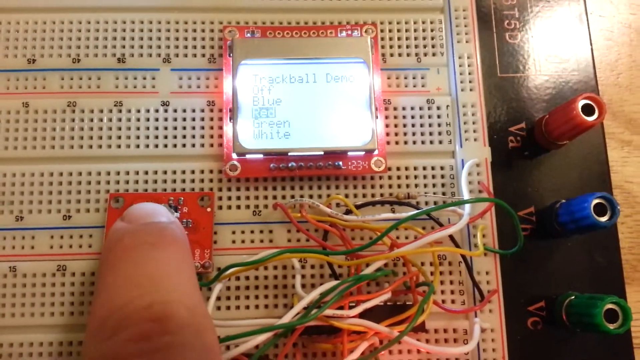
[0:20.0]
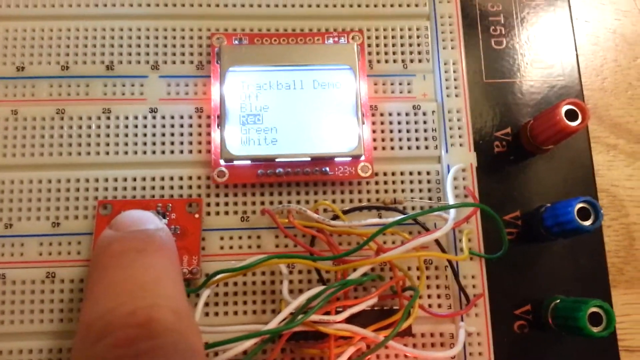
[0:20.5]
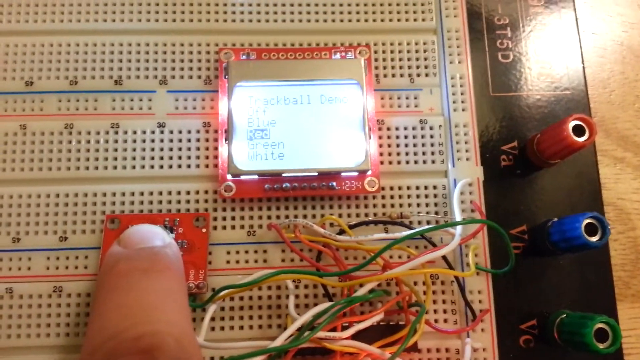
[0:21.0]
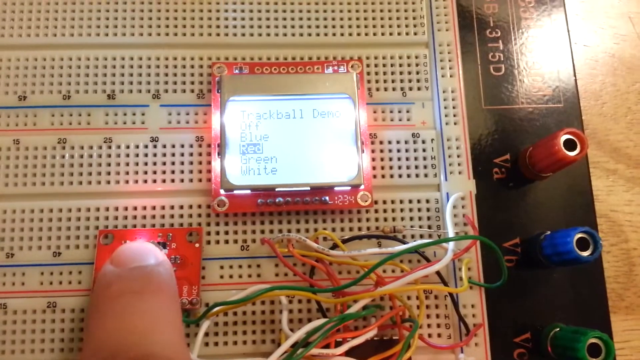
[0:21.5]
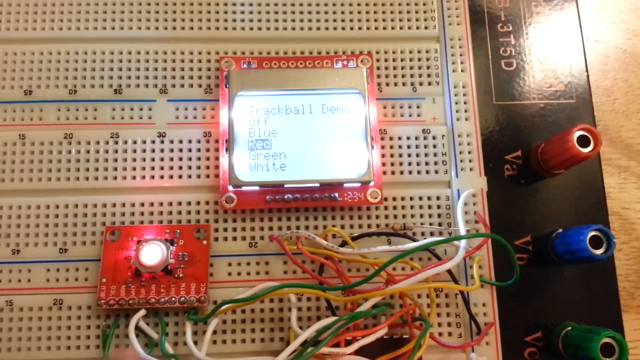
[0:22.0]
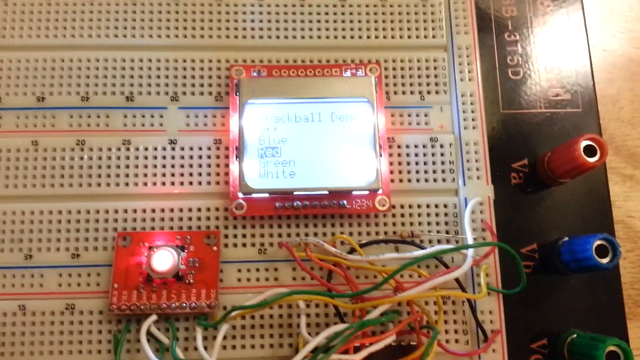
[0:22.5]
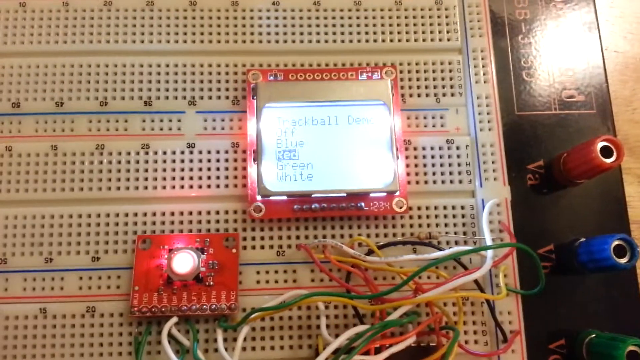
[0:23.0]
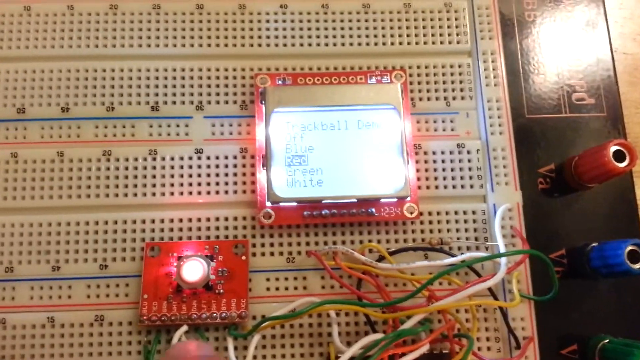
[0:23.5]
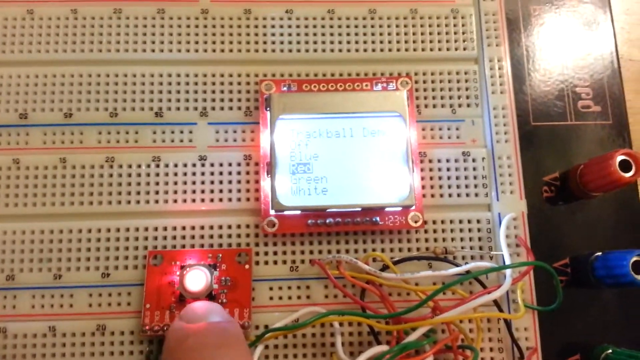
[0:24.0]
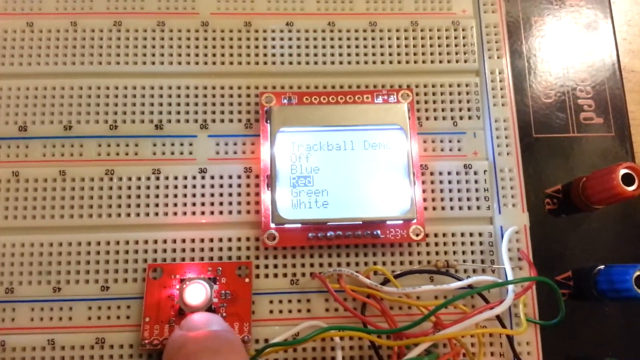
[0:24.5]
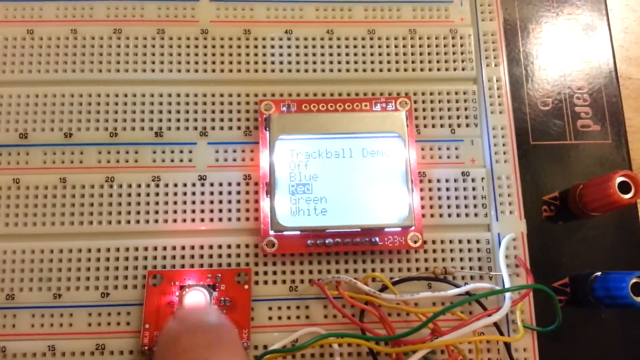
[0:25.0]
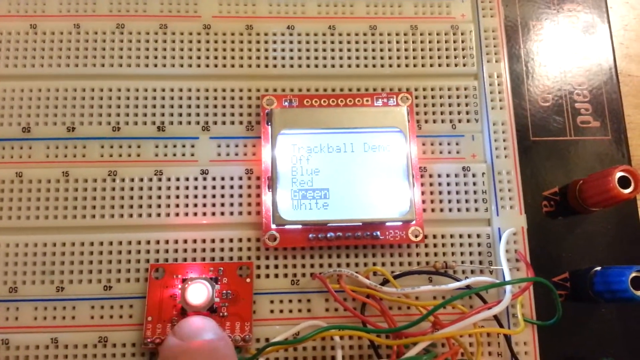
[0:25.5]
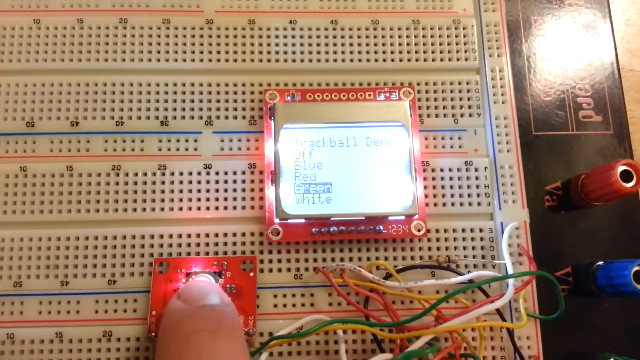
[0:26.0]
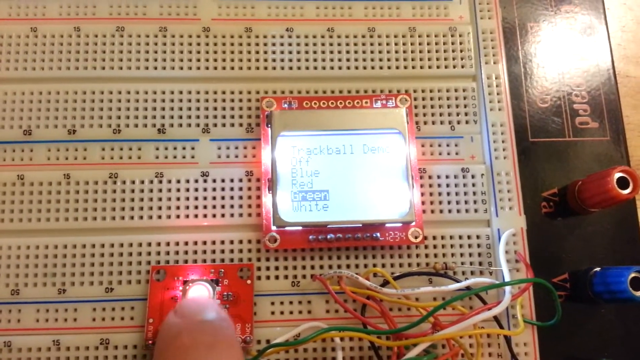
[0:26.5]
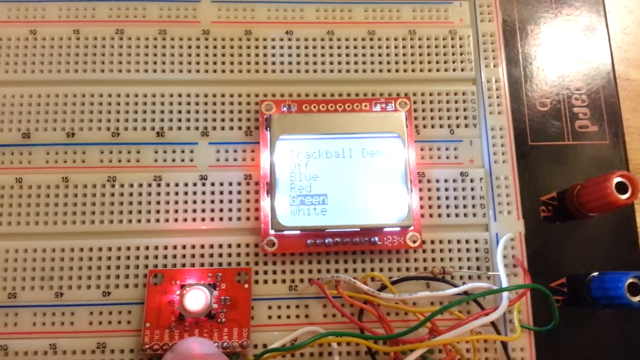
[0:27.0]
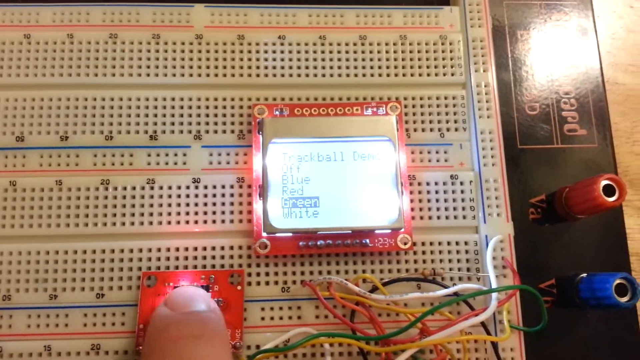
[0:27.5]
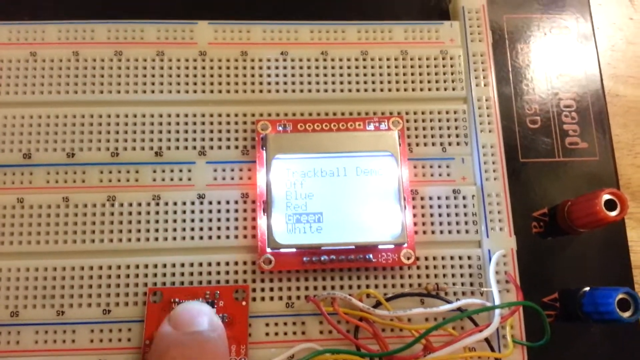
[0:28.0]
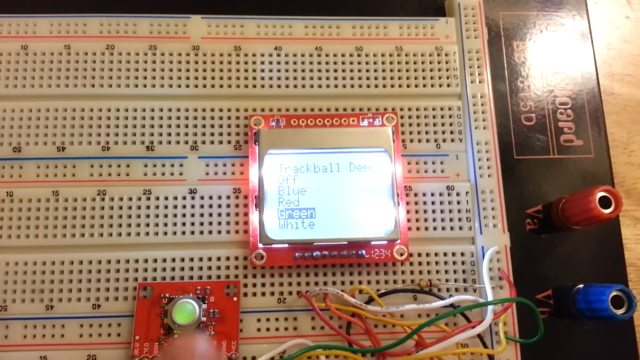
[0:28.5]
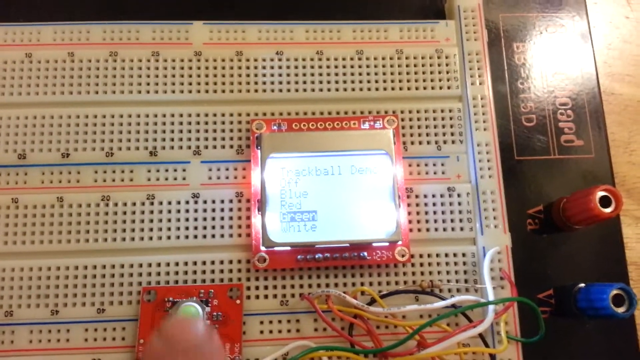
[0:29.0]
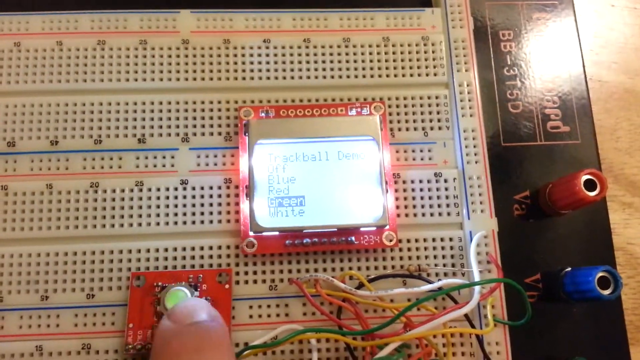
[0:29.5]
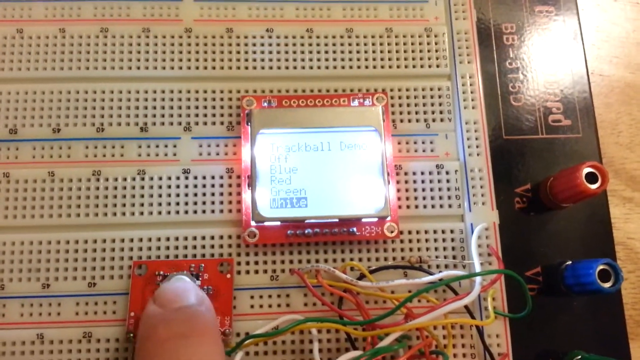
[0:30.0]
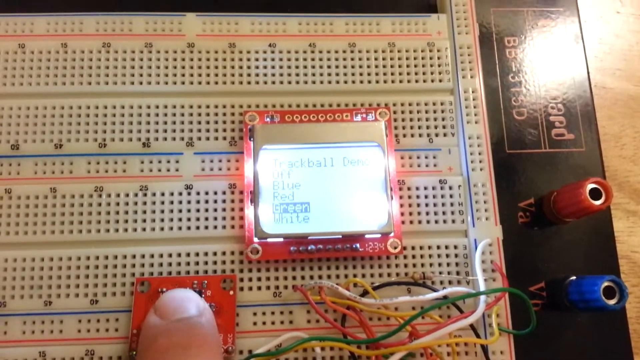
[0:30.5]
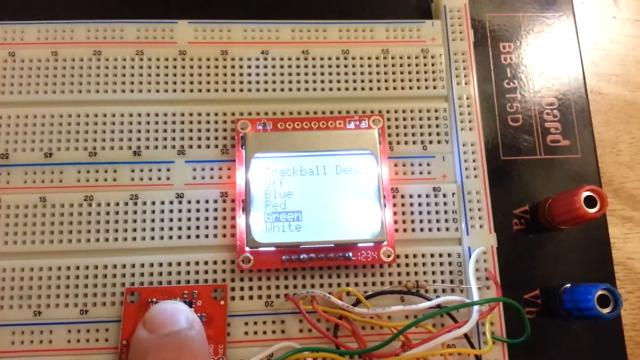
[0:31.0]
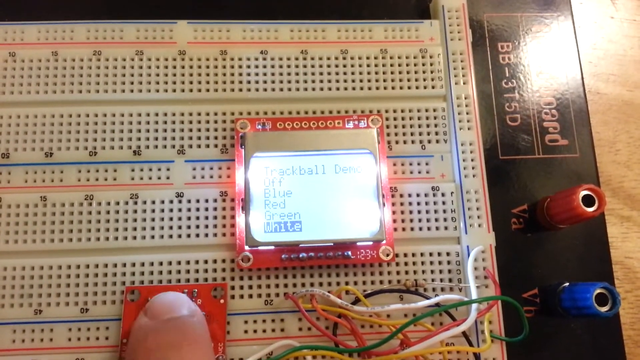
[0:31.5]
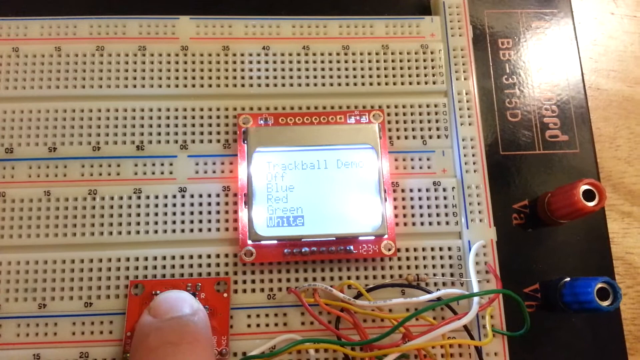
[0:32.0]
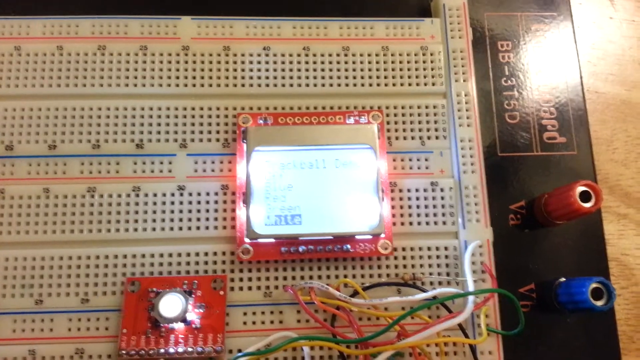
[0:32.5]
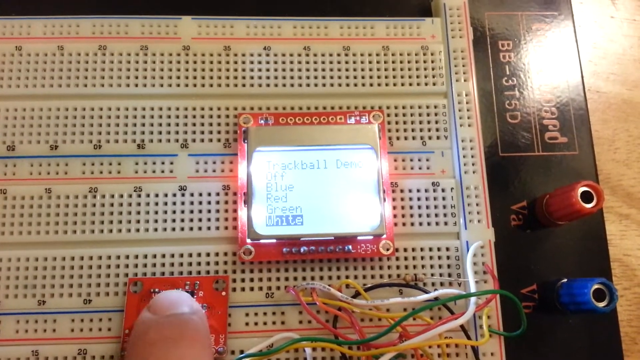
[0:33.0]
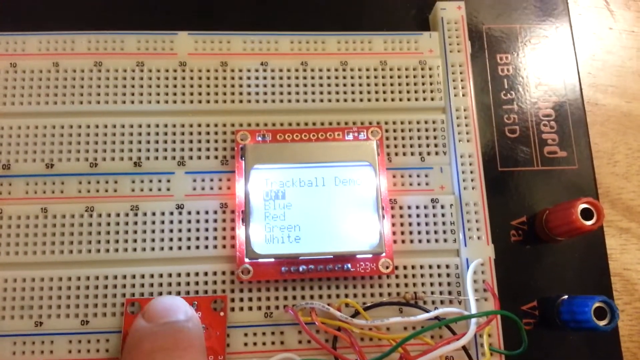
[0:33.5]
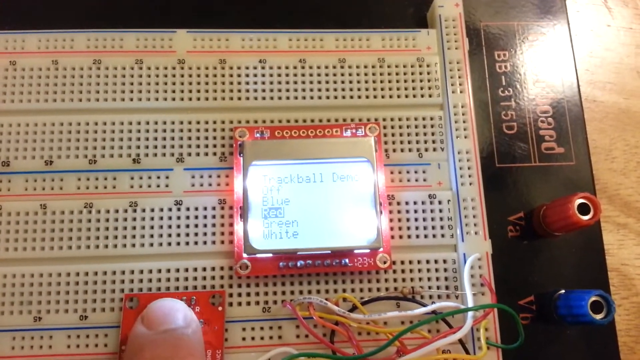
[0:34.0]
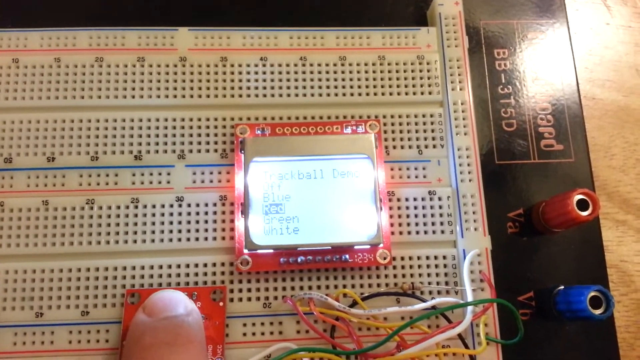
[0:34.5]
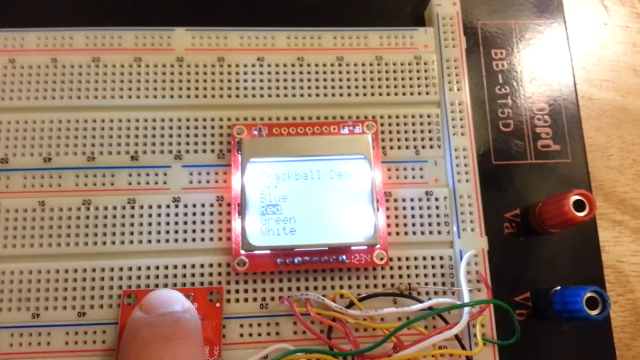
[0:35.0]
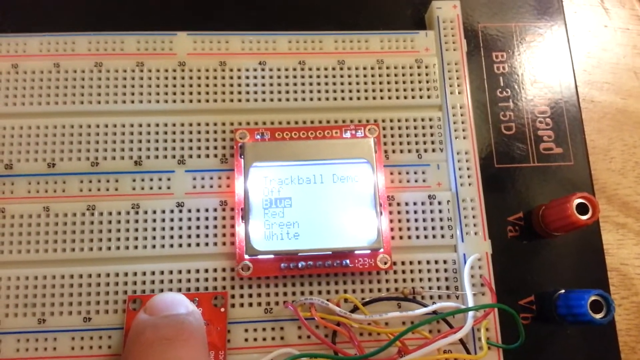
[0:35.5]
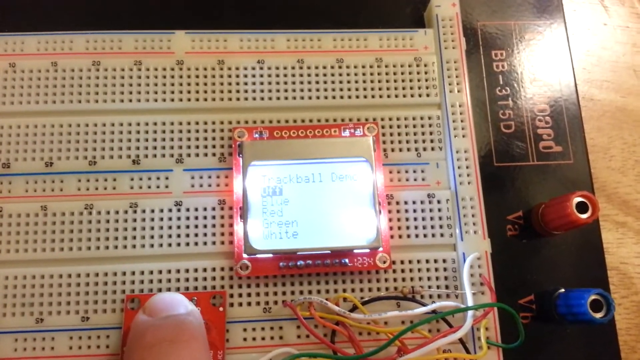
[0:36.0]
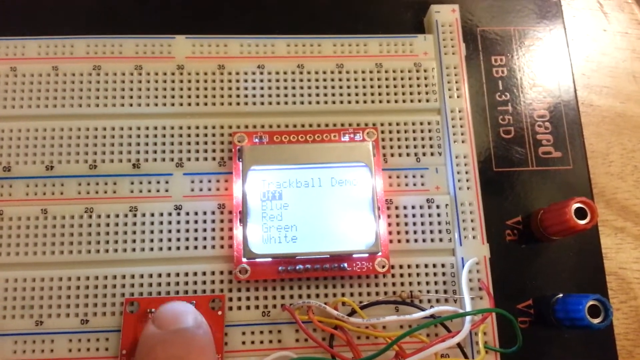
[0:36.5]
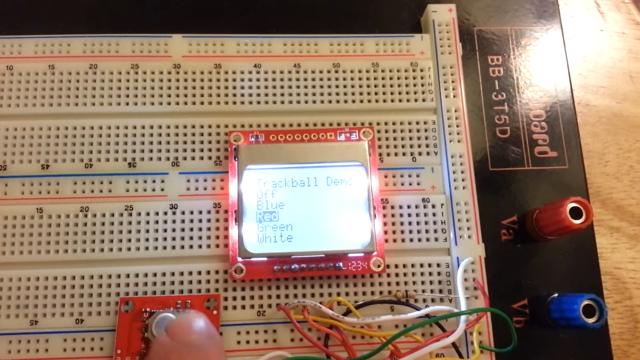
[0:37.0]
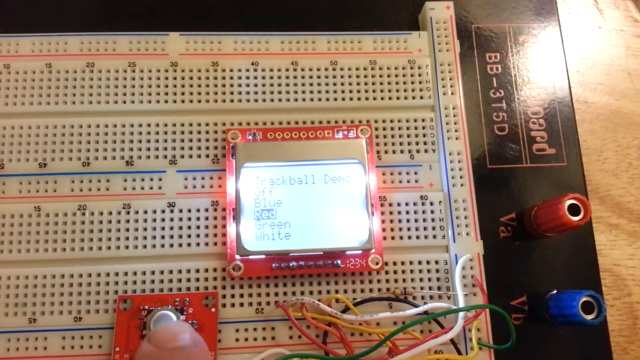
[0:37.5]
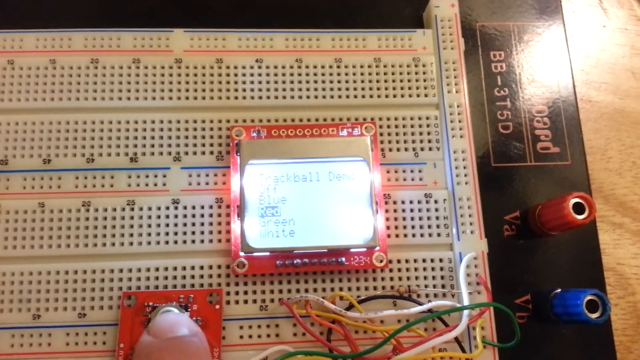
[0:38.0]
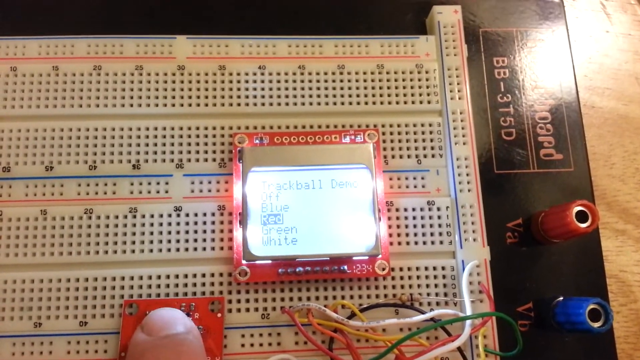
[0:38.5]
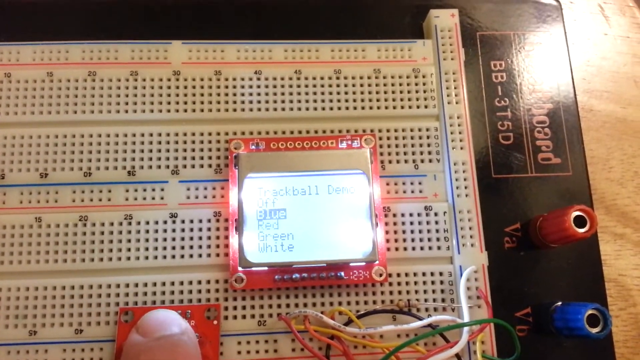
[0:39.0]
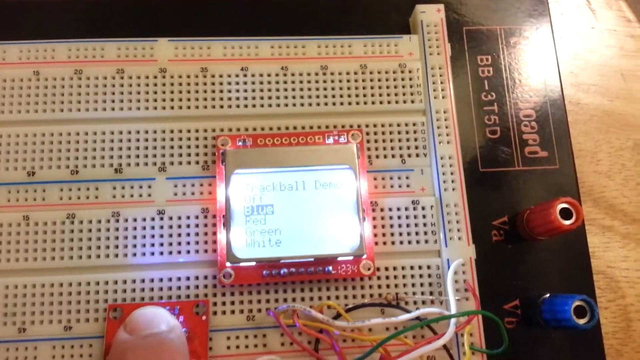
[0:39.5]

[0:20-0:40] The screen is still on, and the view zooms in on it, showing the words "off", "blue", "red", "green", "white", along with another text, "focal". The hand keeps pointing out other parts of the chip, then presses a button on the right side of the screen. As it keeps pressing, the screen scrolls down through the words, and the button changes color to match, turning green, white and red as the selection moves. The board is the motherboard of the tool.